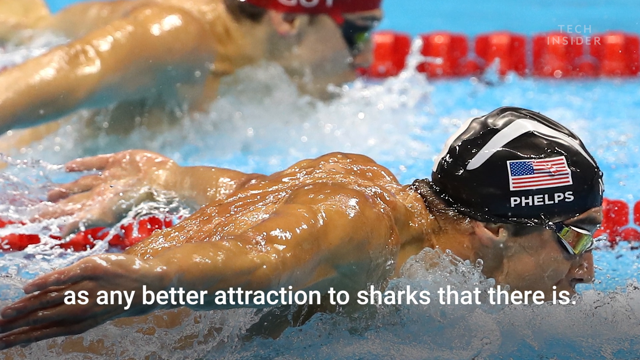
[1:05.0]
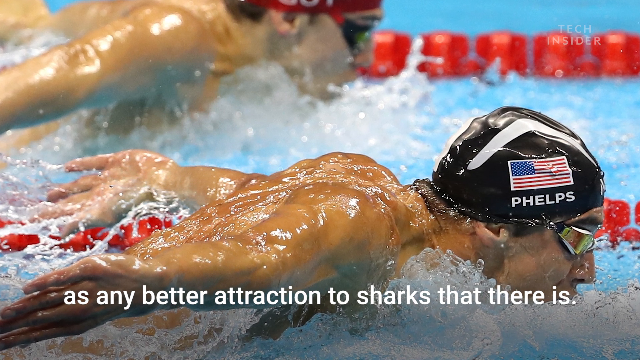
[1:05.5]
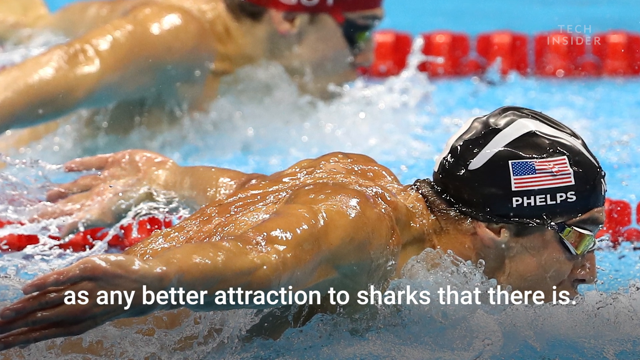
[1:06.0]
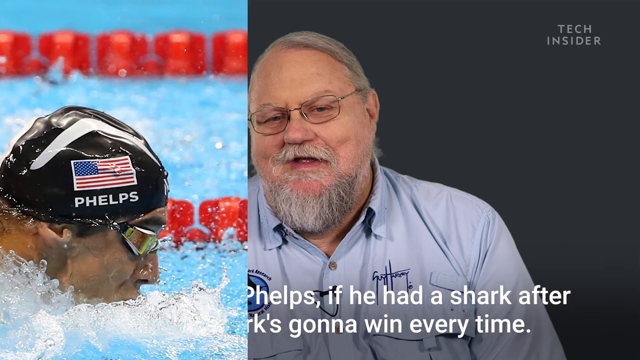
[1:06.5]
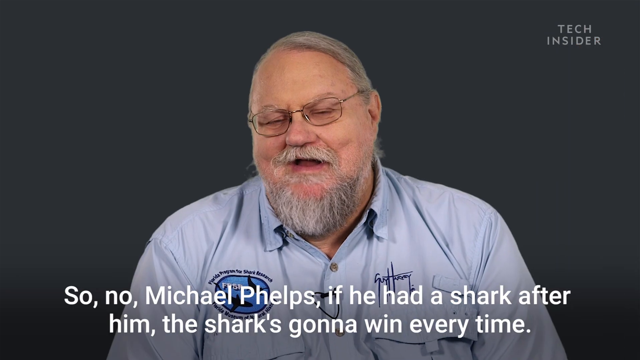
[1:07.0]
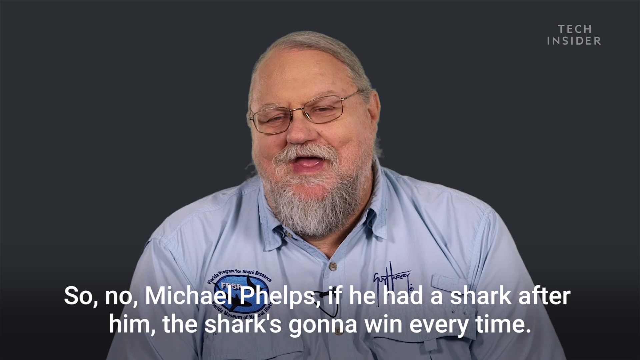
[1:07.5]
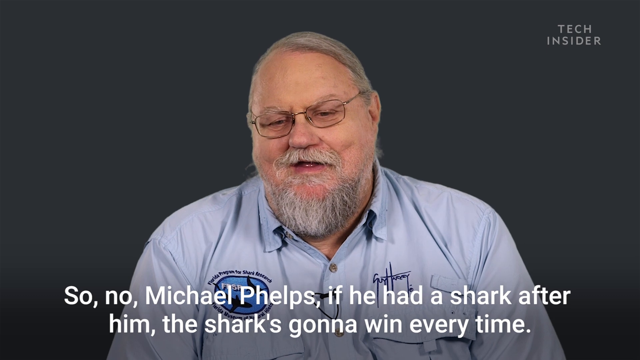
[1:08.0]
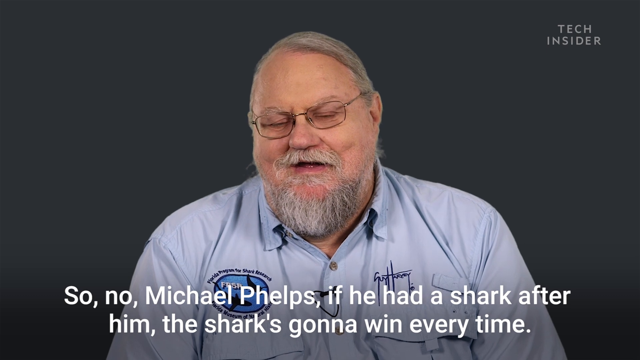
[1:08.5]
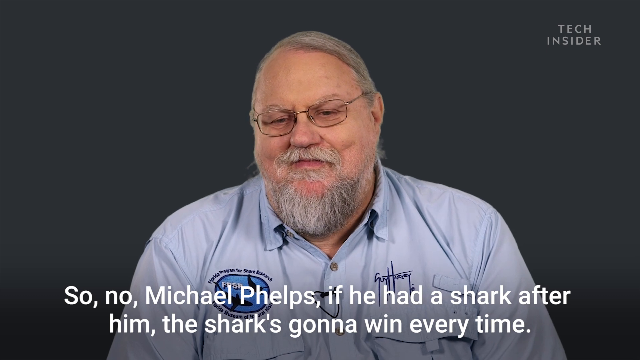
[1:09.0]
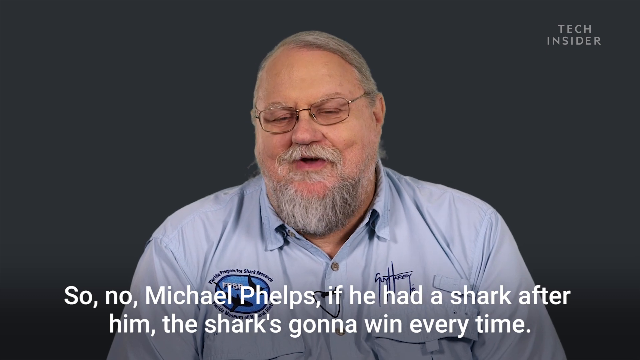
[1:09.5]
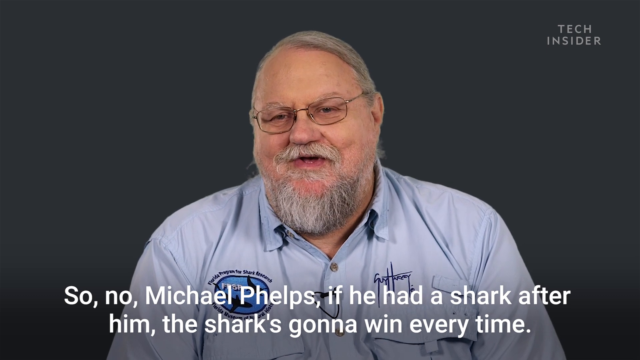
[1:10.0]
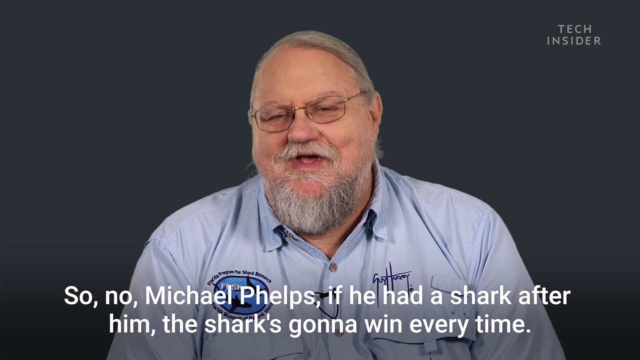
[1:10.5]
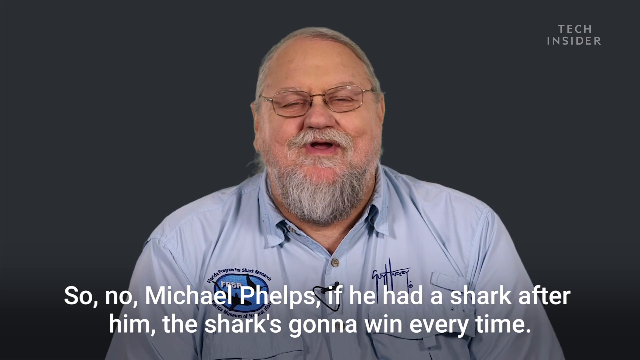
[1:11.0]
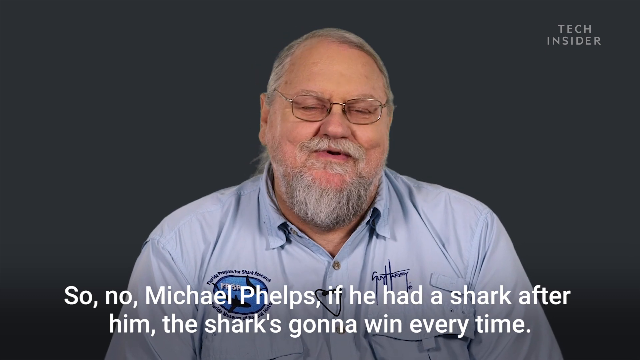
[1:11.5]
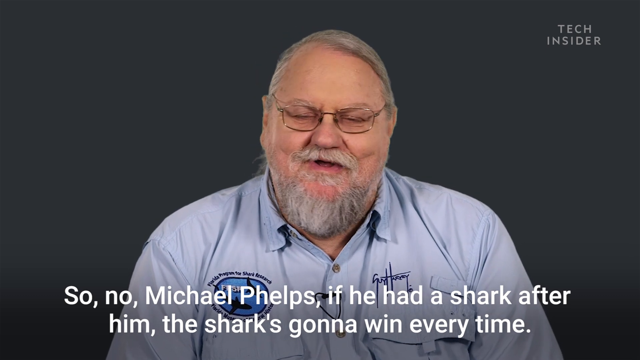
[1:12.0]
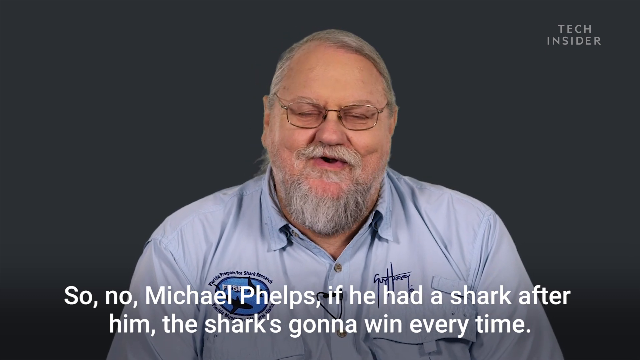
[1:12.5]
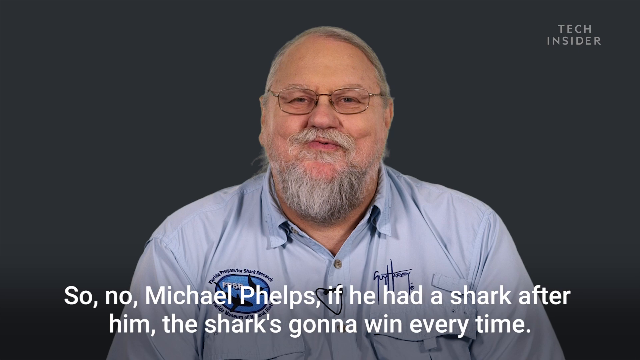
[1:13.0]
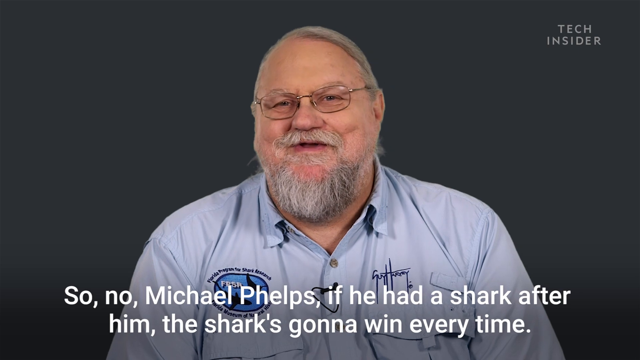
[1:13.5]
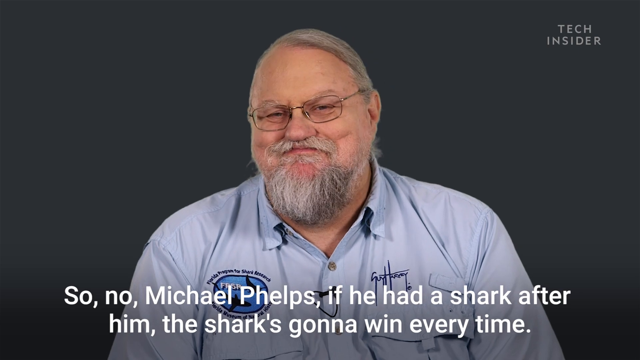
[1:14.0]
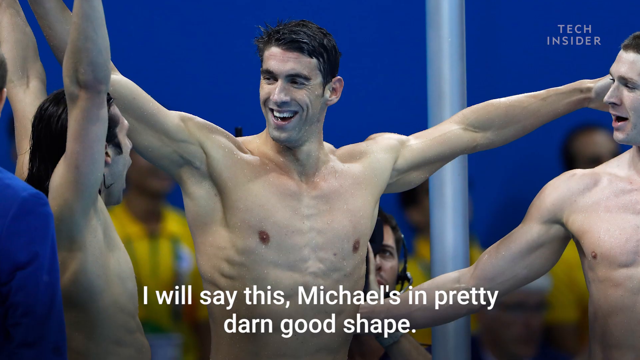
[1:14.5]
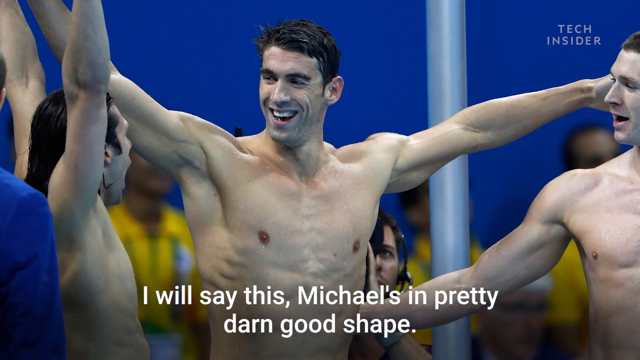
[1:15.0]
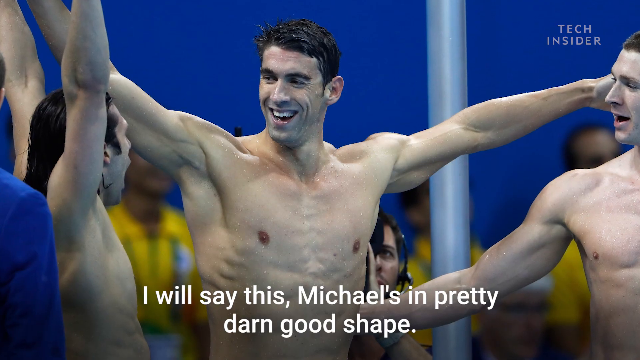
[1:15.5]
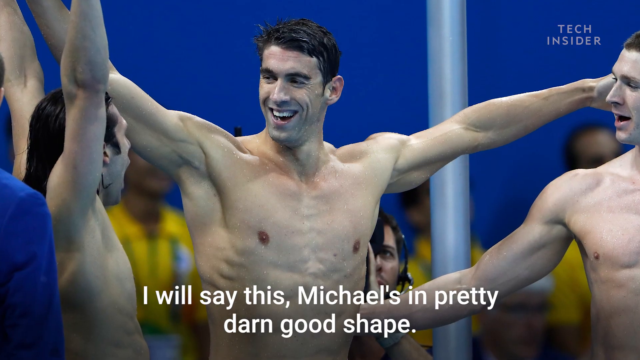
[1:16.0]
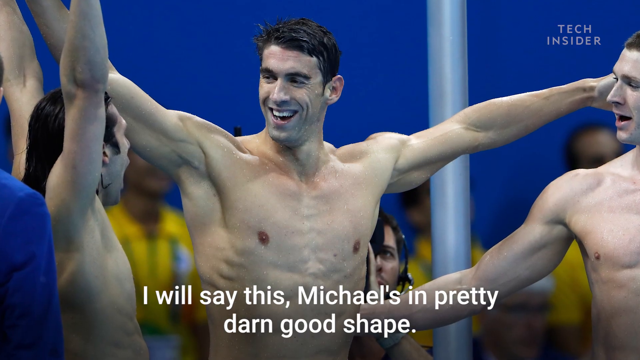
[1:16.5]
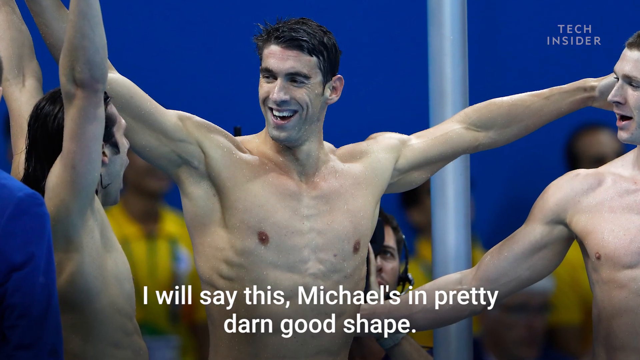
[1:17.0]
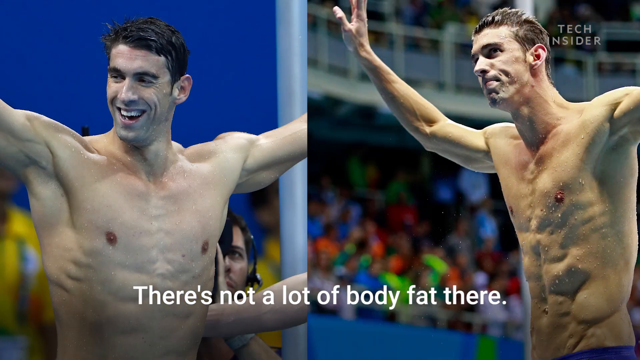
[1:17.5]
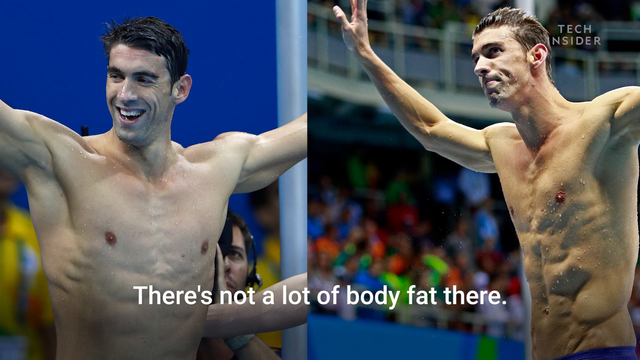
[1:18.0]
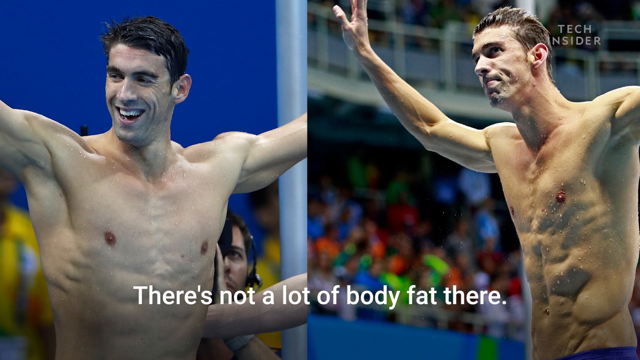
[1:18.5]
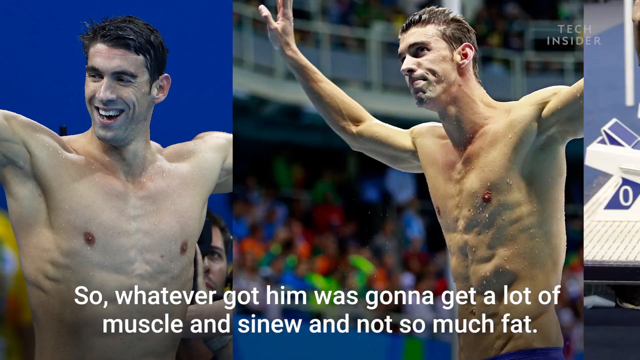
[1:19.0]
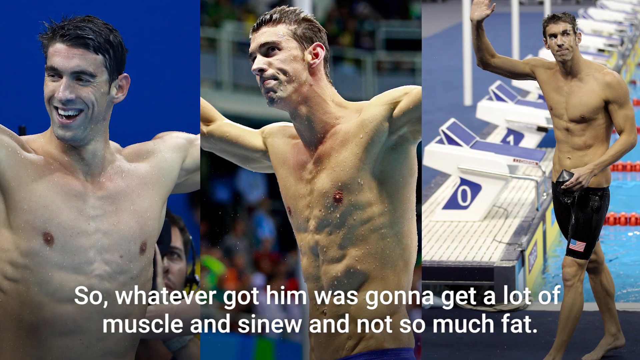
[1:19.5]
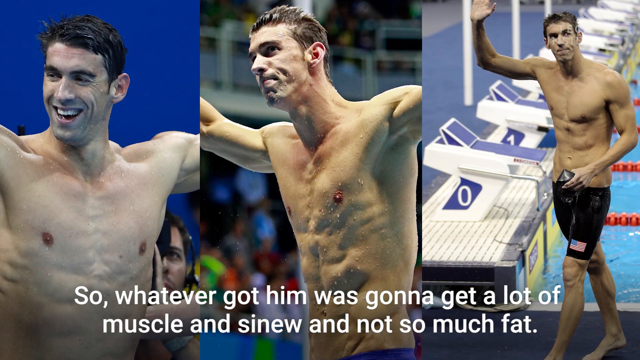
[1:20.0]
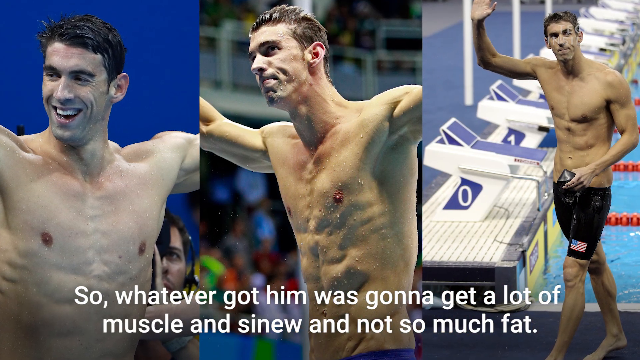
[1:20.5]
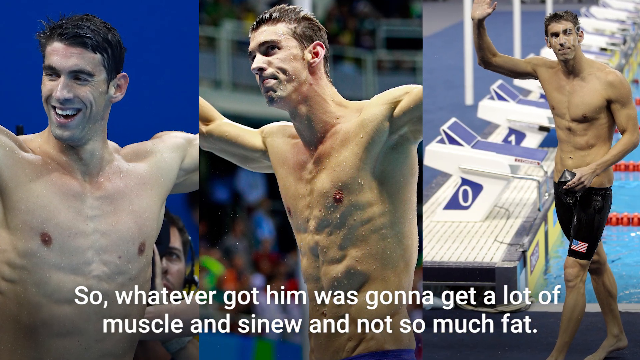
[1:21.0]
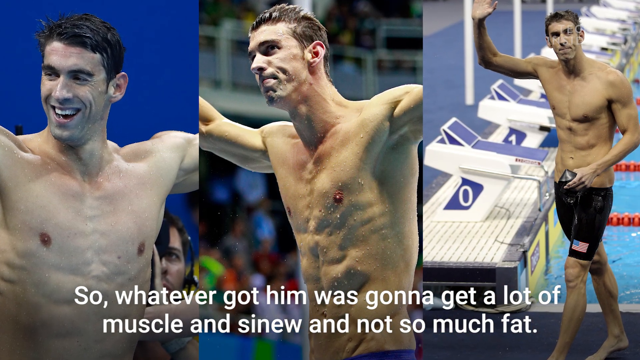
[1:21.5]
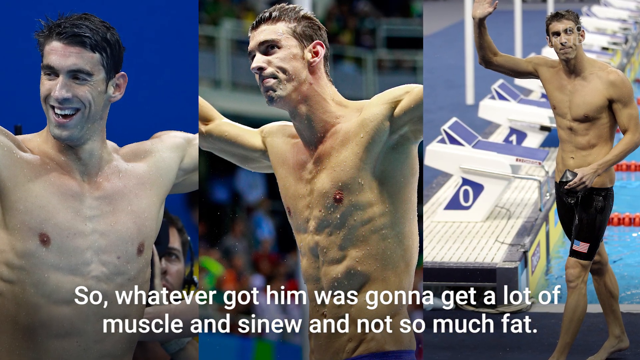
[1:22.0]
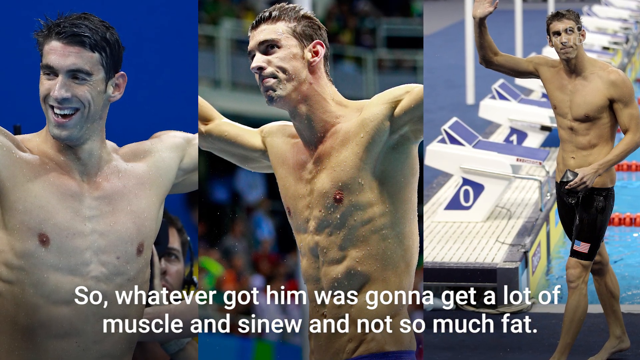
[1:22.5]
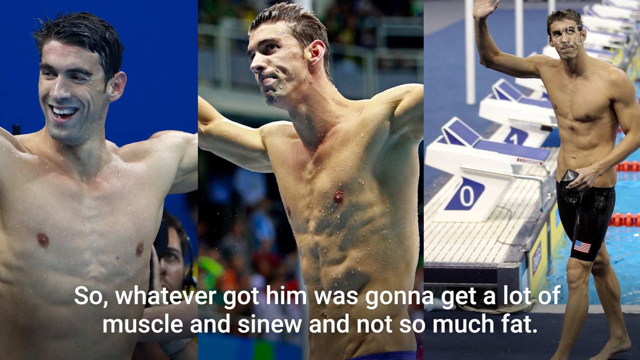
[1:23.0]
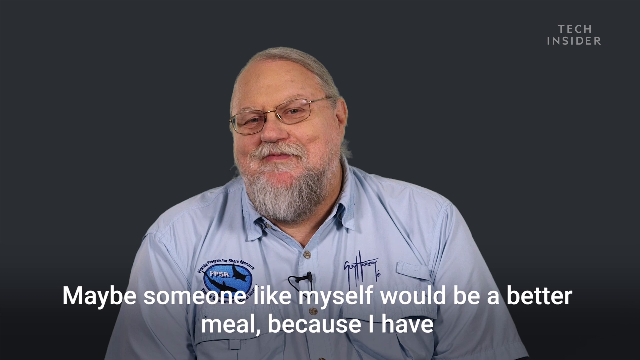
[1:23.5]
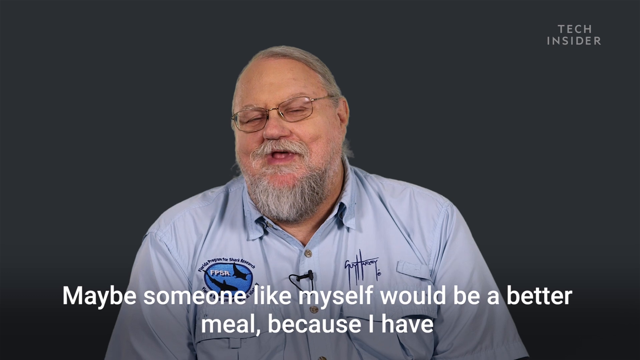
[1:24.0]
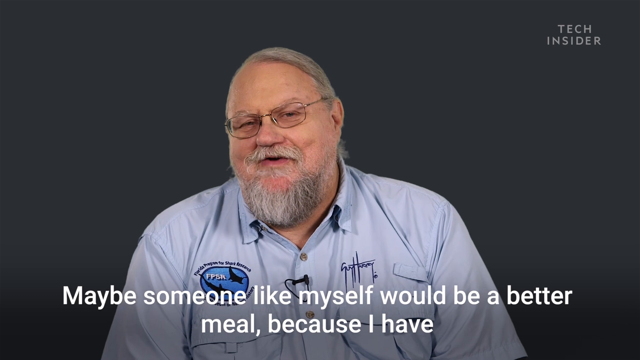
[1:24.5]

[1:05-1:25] Phelps swims in the water, racing someone.